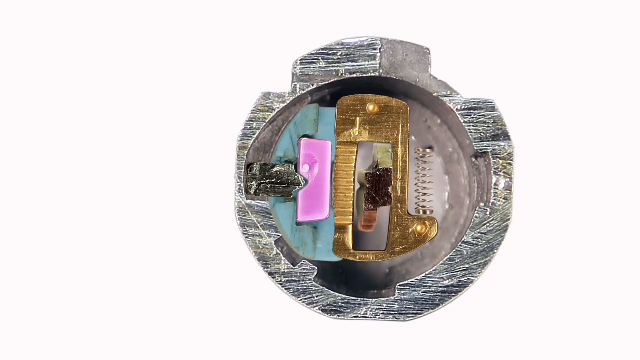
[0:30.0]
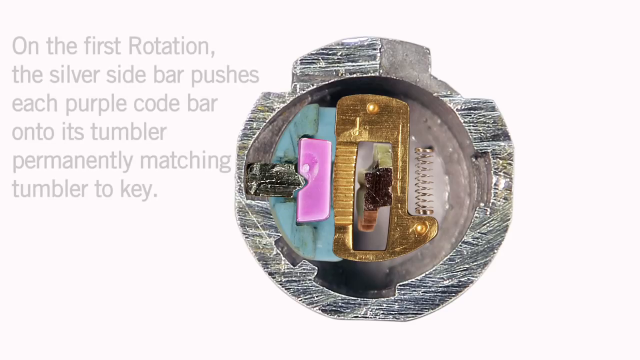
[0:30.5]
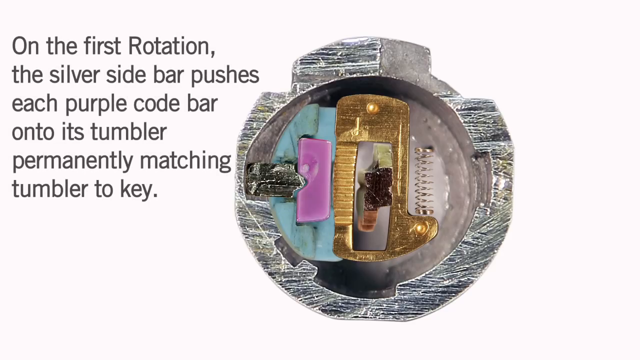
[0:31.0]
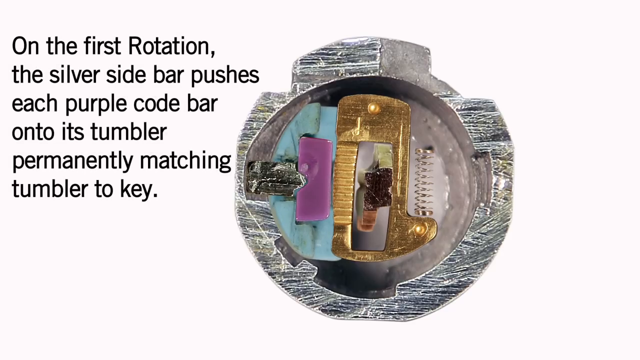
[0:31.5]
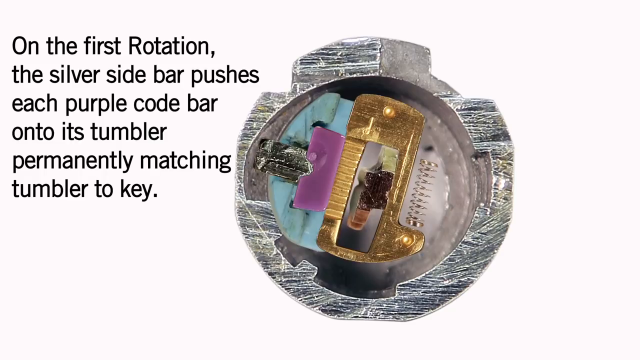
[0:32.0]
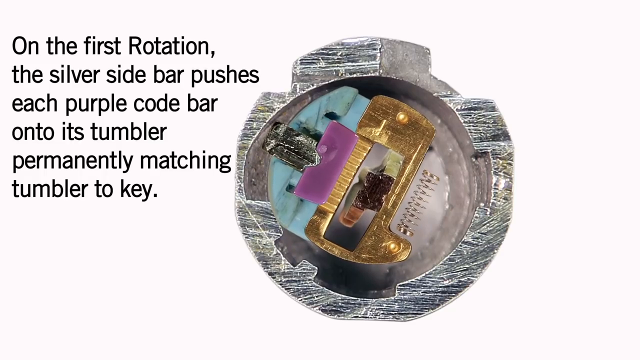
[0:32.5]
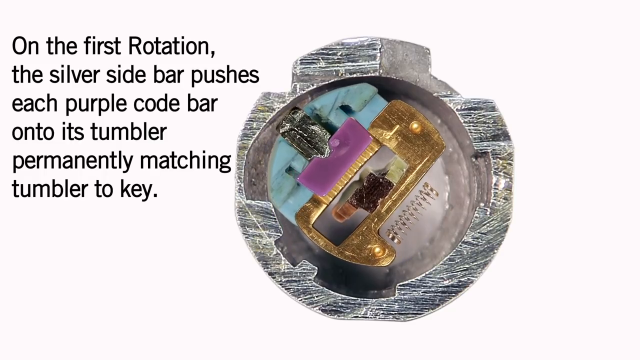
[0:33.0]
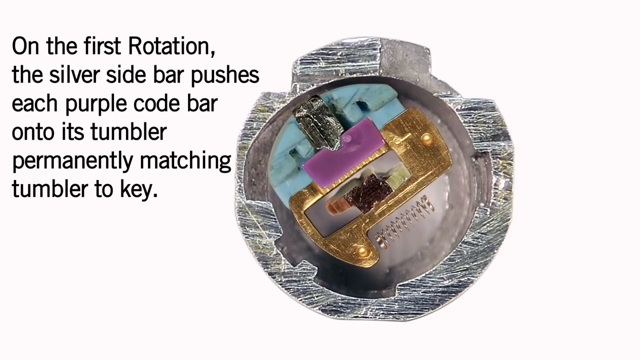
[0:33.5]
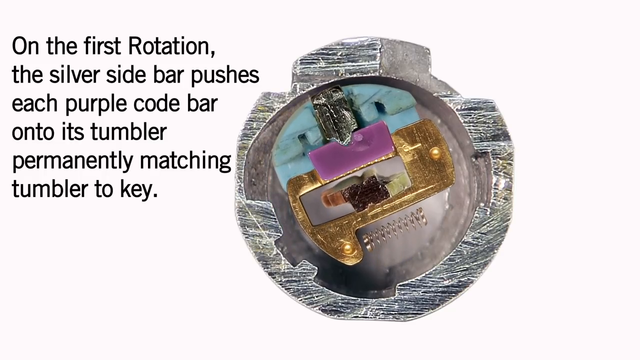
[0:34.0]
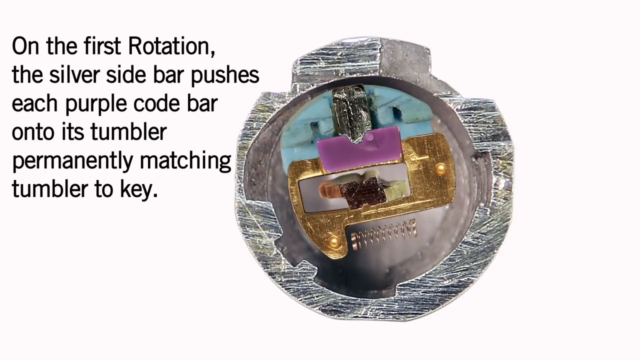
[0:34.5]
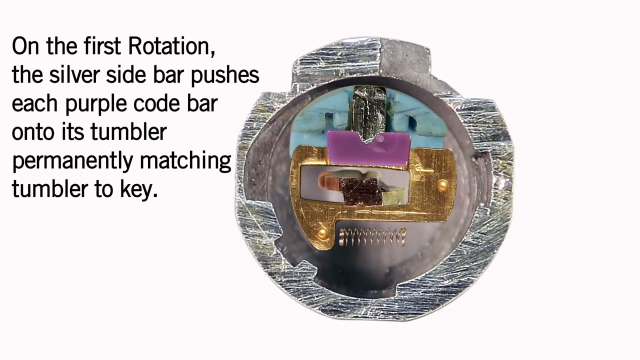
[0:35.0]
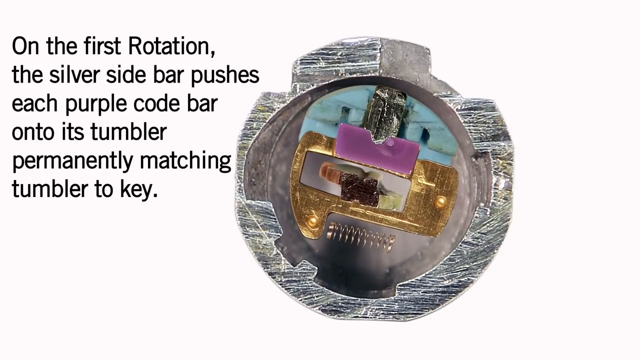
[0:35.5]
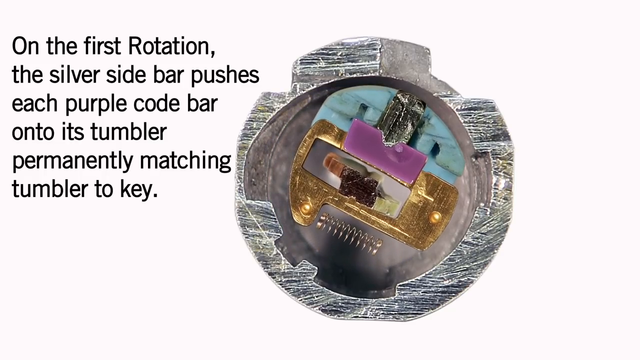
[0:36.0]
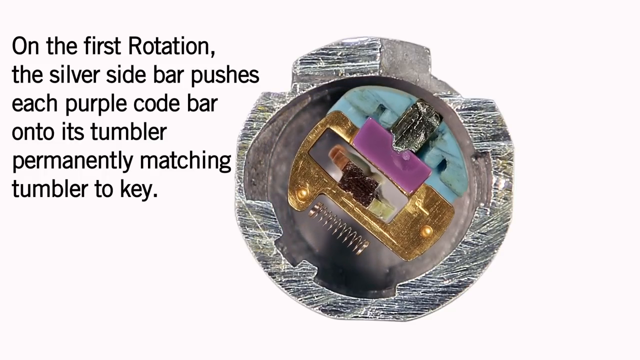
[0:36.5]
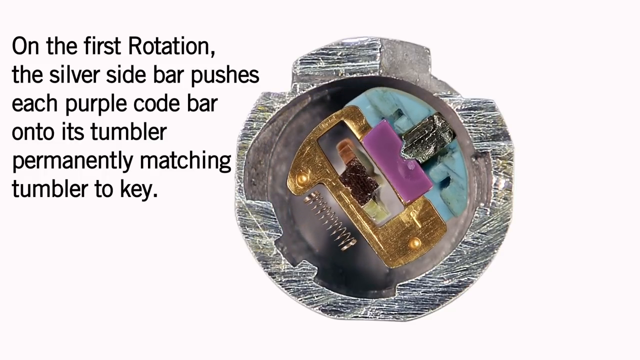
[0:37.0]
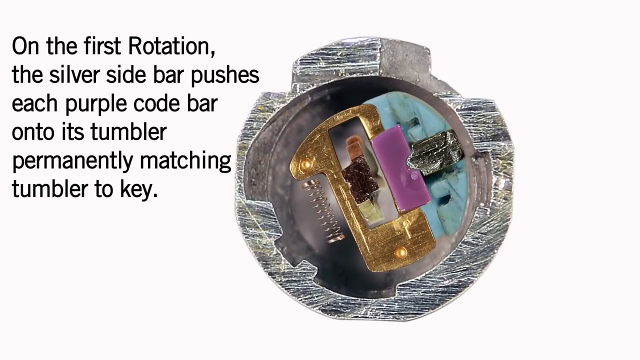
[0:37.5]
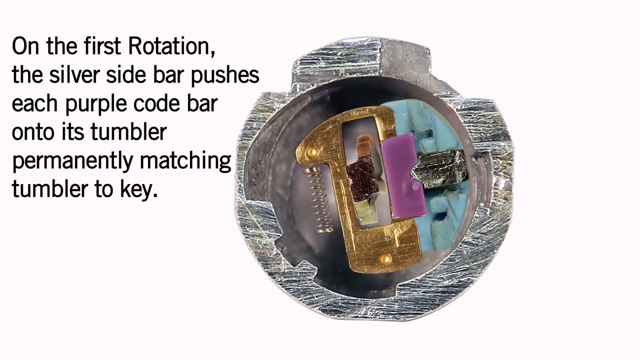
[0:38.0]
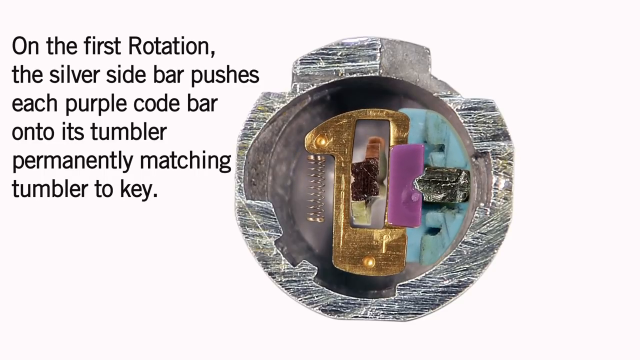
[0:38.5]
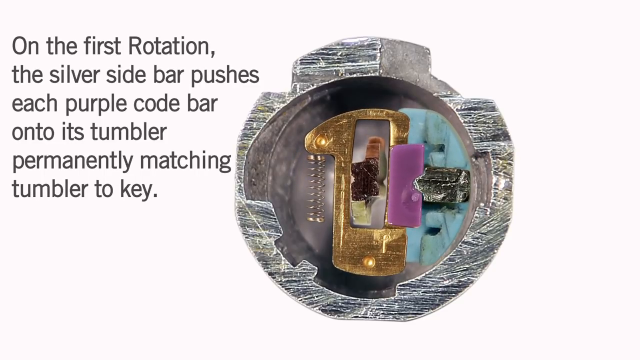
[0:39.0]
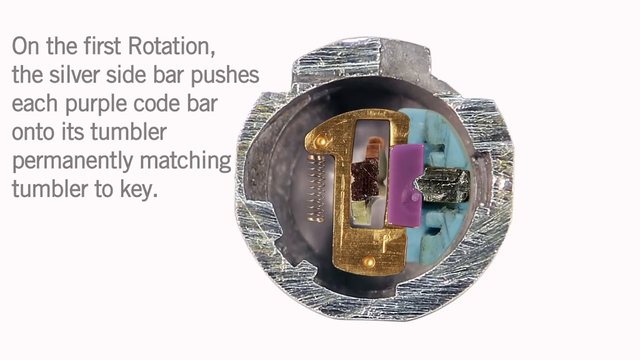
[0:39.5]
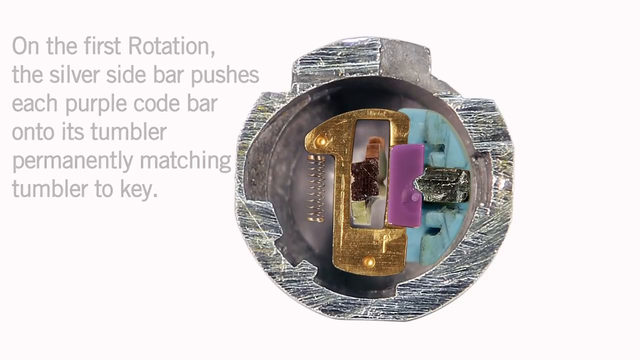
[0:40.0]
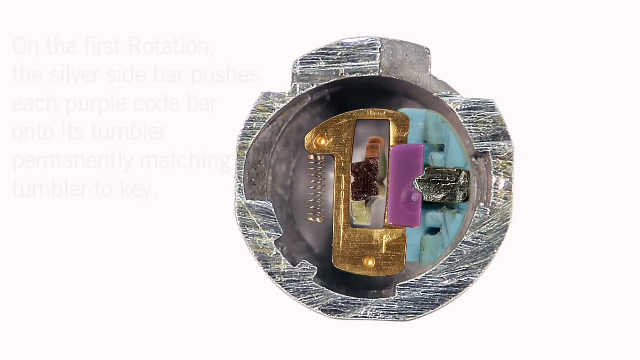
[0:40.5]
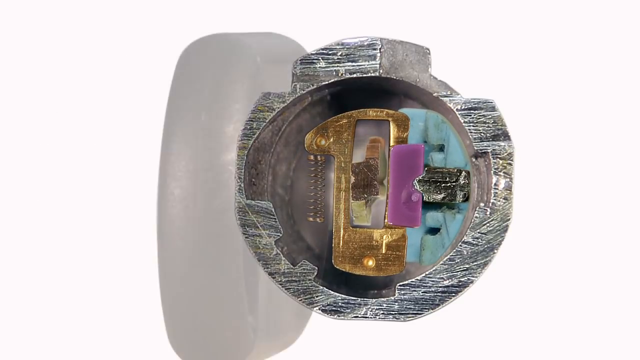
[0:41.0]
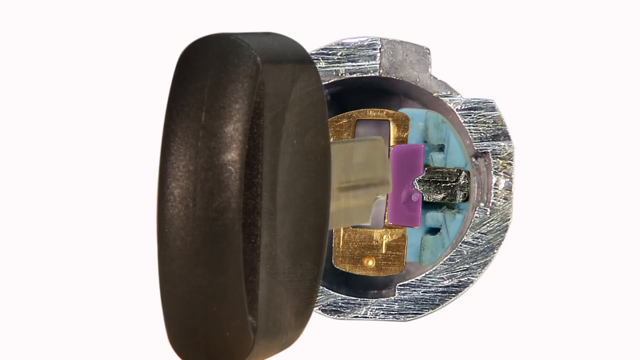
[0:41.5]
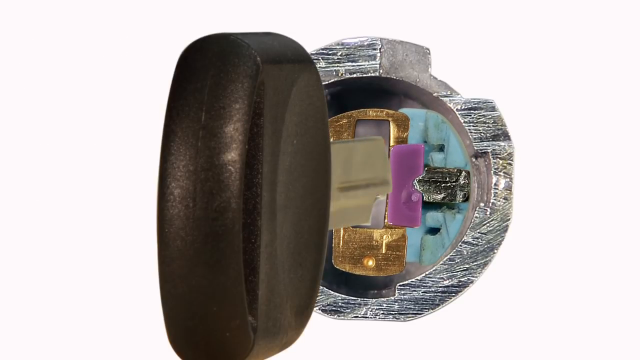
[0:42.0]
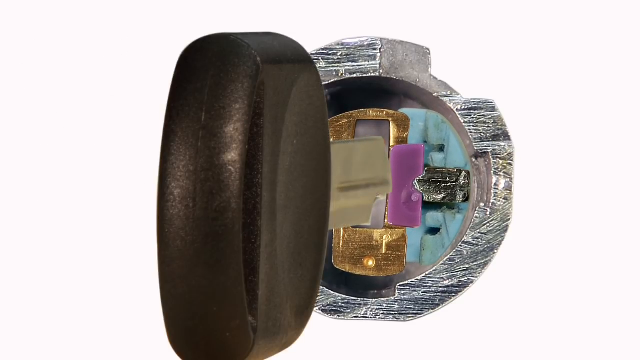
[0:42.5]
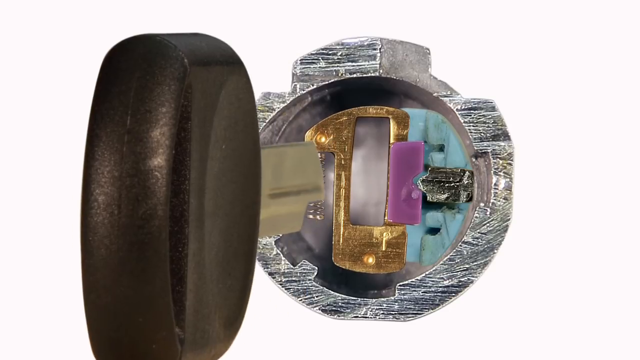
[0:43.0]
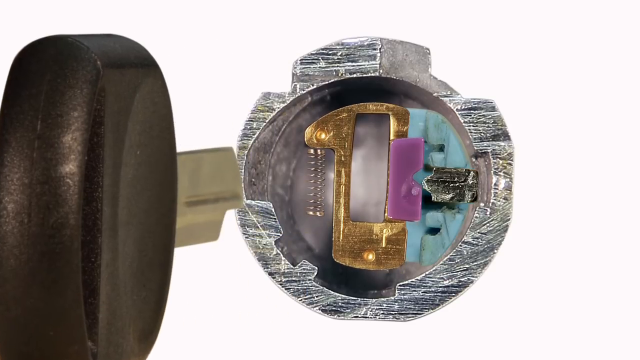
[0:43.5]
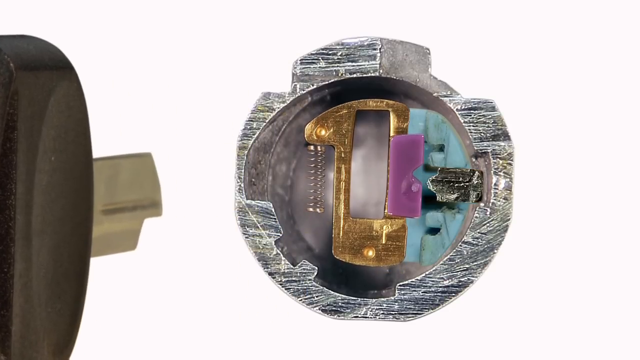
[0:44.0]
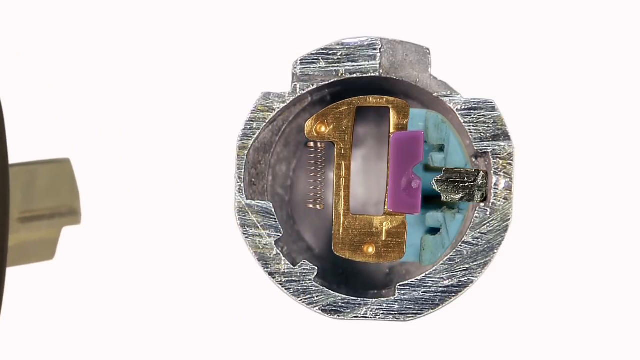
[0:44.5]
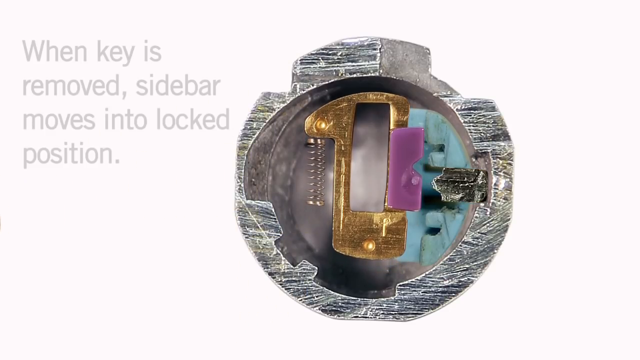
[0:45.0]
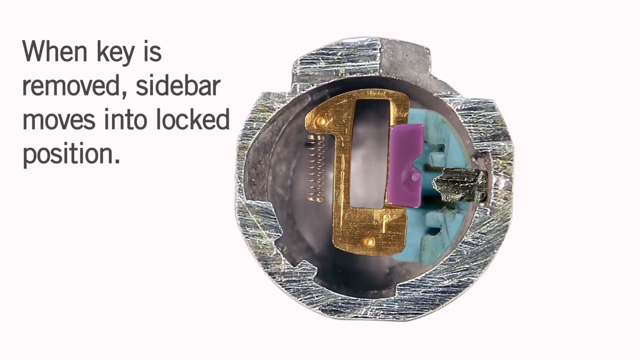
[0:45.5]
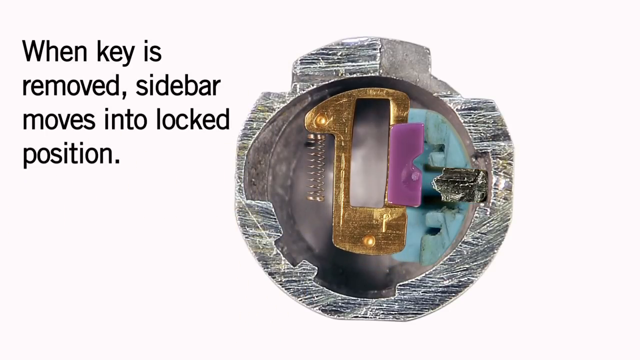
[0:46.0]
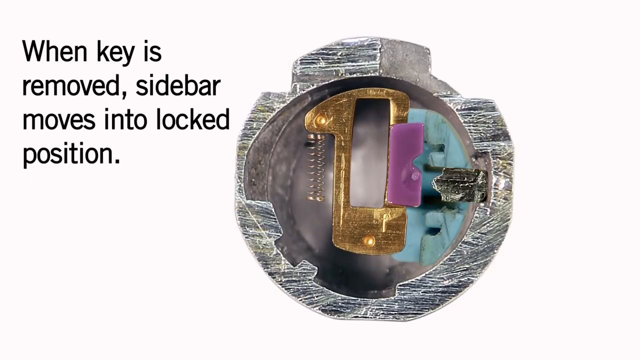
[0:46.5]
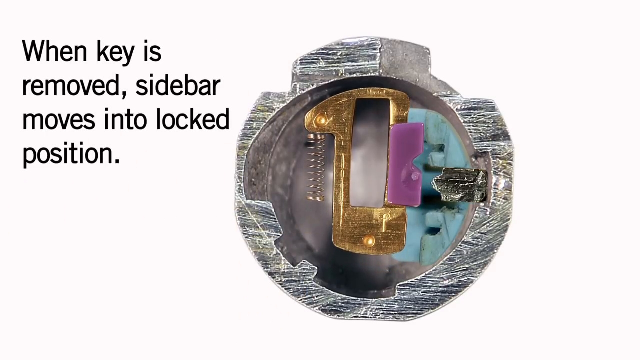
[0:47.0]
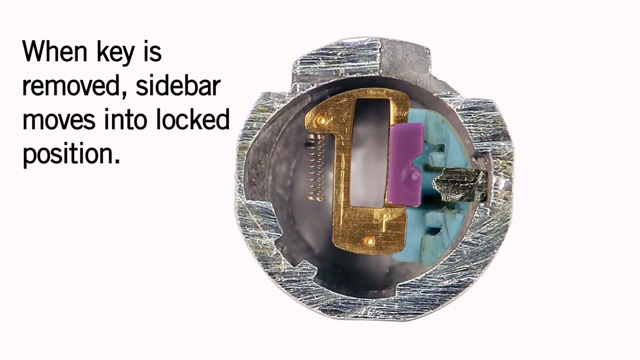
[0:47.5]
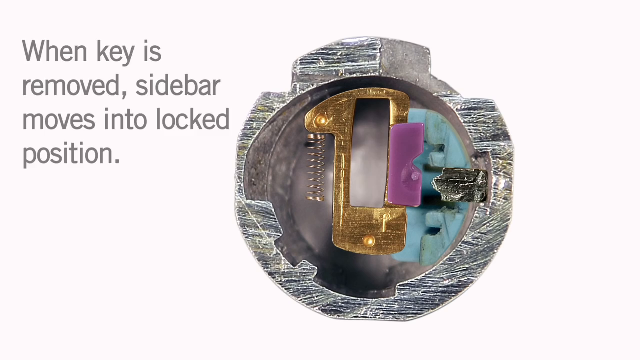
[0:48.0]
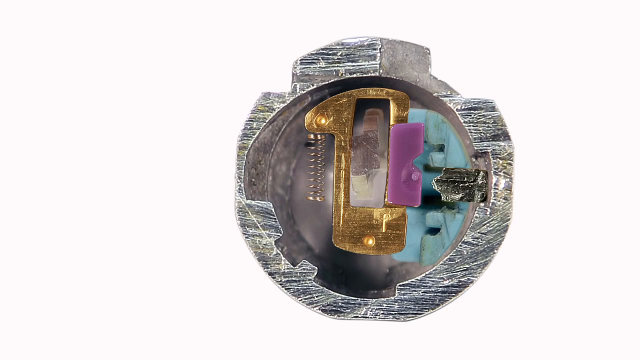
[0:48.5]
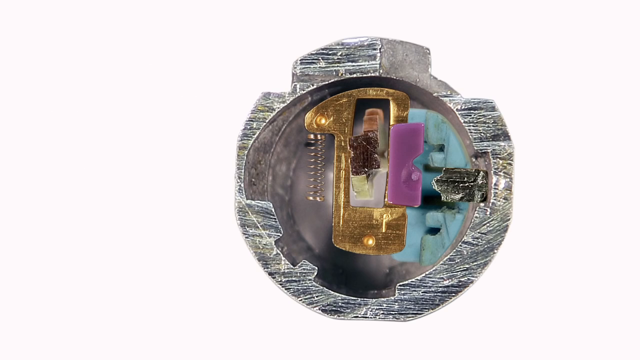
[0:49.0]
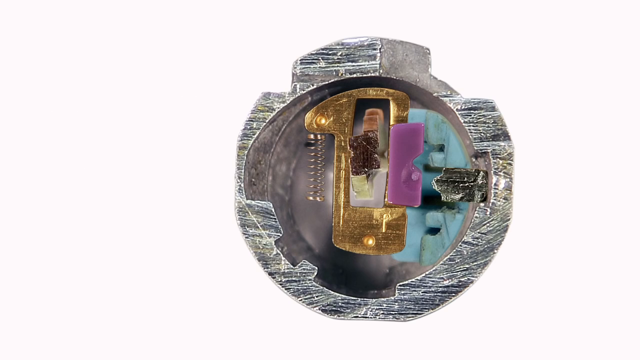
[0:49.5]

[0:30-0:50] A brief breakdown of how the rotation system within the lock works is given: on the first rotation, the silver sidebar pushes into each purple code bar on its tumbler, illustrated with purple subsections and differently colored pieces. Once set on the tumbler, it permanently matches the key, so only that exact key can unlock it. The key turns a full 90 degrees and then another 90 degrees, from left to right in a single action. The key is then removed from the outside and the side of the key is shown in full. As the key is removed, a visual example shows the sidebar moving into a locked position.